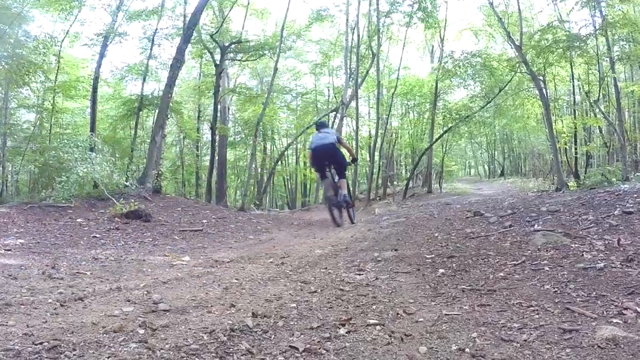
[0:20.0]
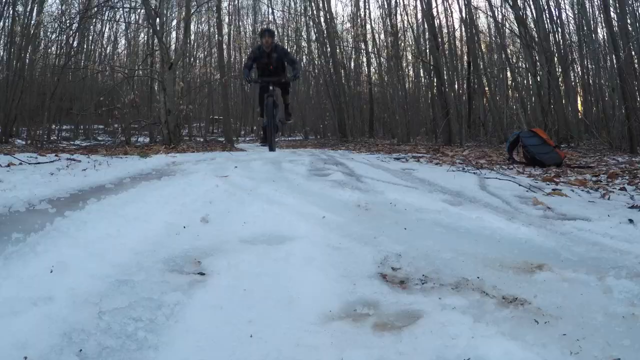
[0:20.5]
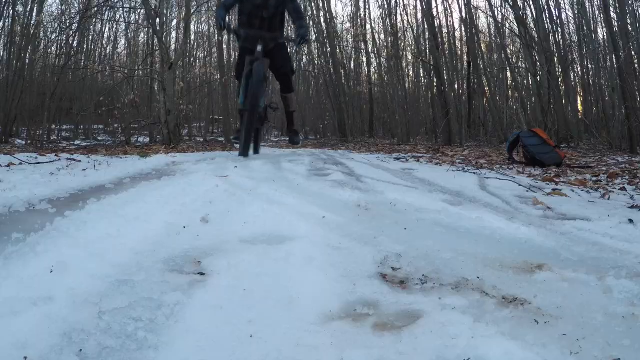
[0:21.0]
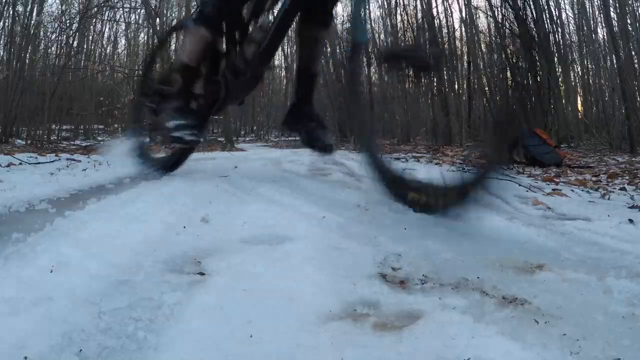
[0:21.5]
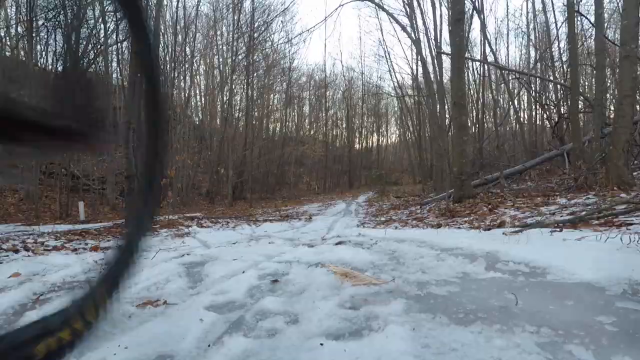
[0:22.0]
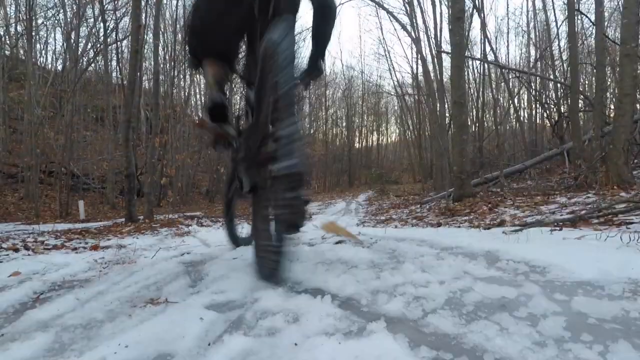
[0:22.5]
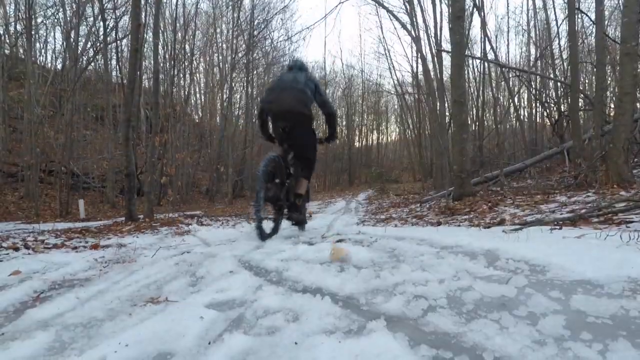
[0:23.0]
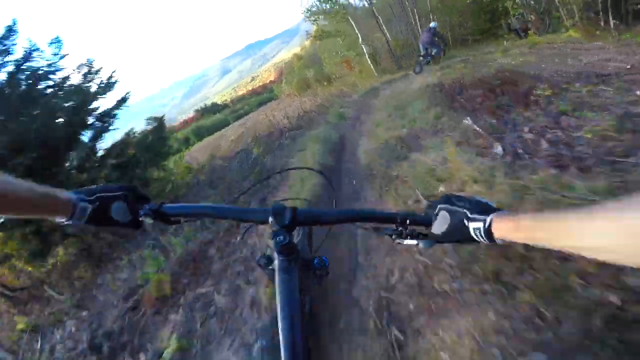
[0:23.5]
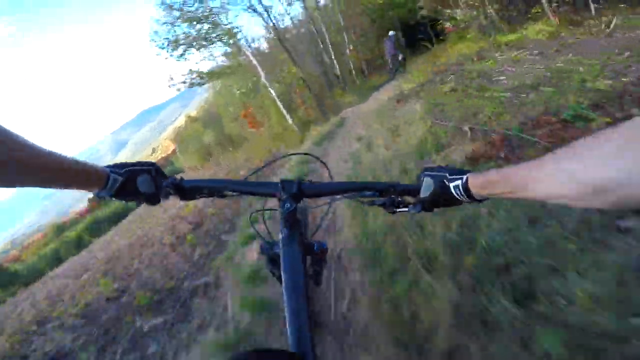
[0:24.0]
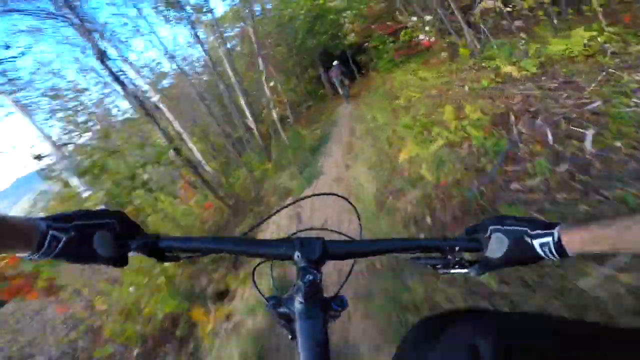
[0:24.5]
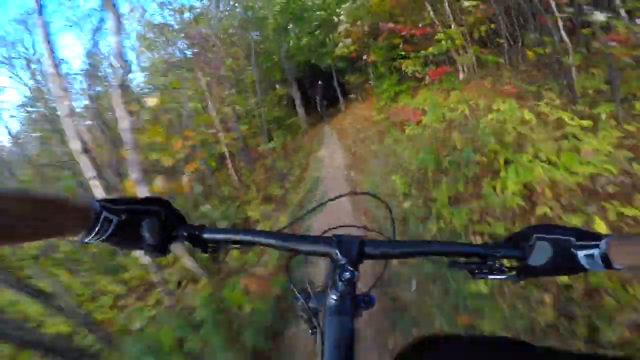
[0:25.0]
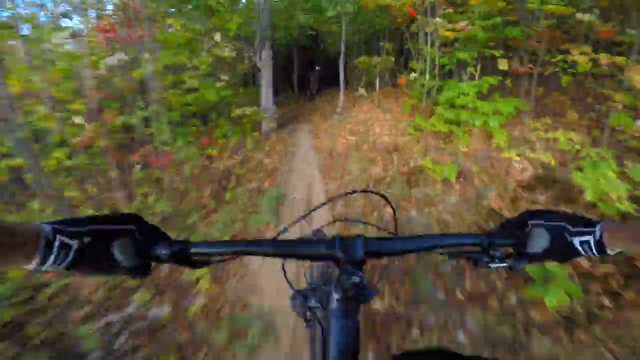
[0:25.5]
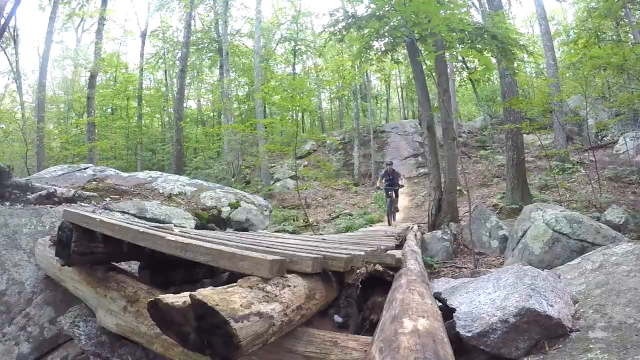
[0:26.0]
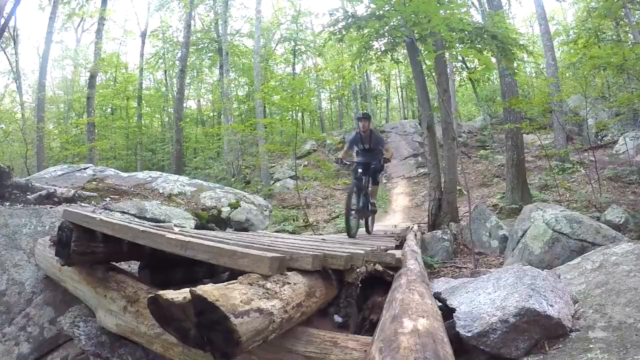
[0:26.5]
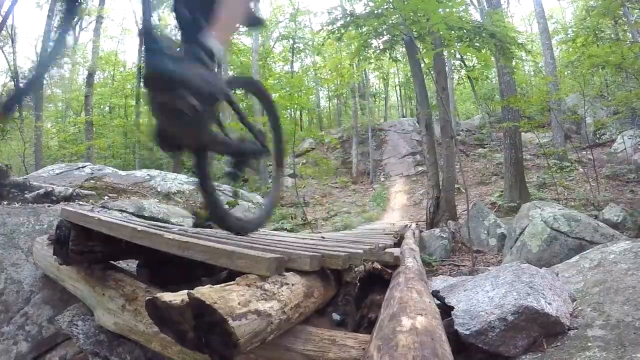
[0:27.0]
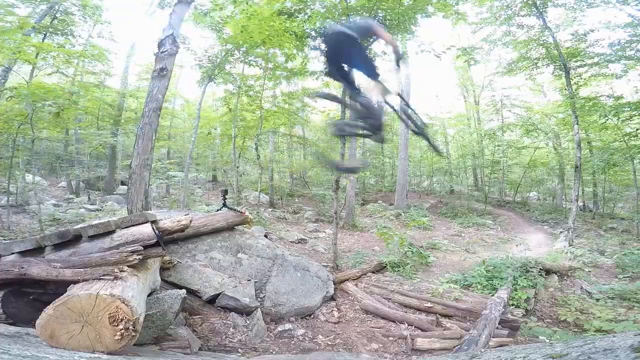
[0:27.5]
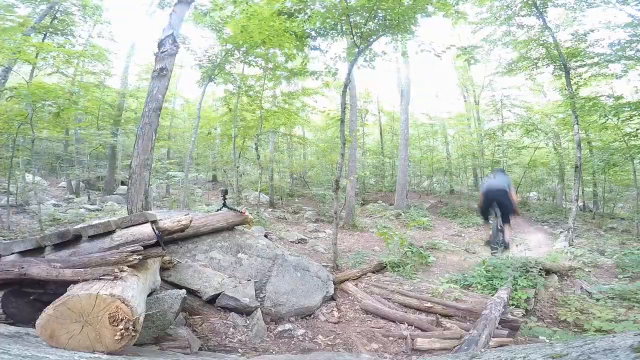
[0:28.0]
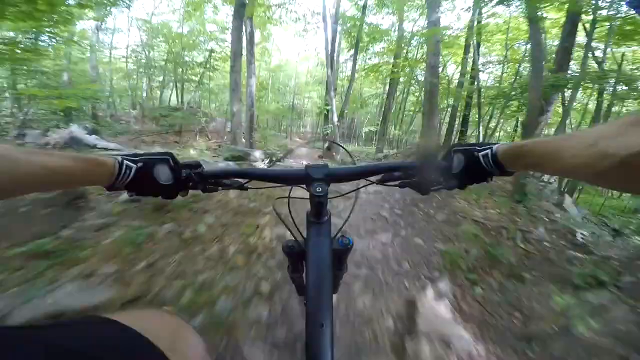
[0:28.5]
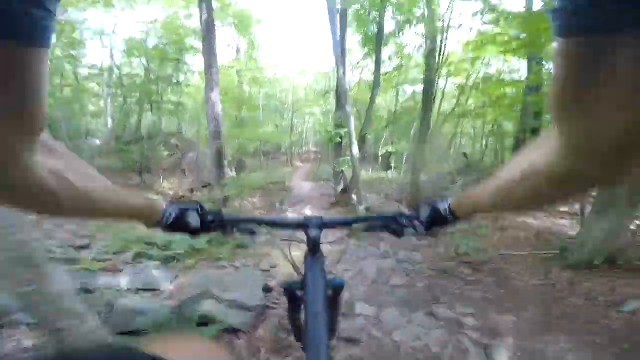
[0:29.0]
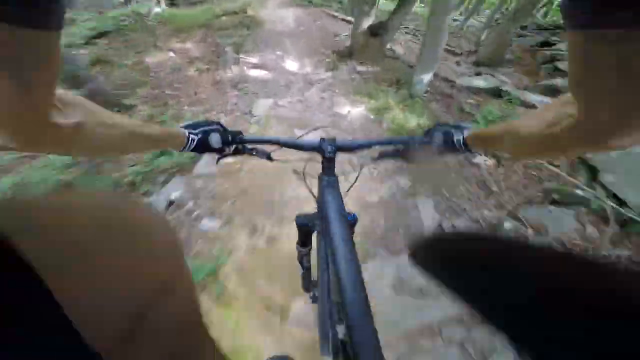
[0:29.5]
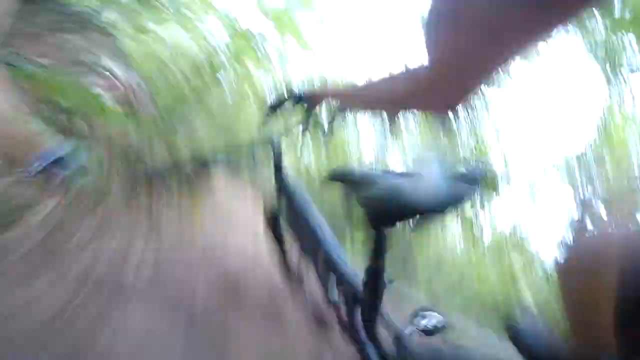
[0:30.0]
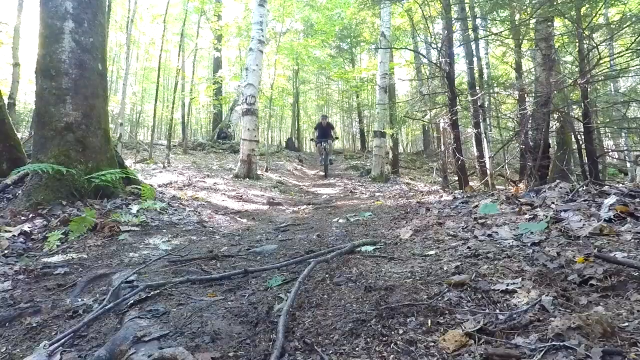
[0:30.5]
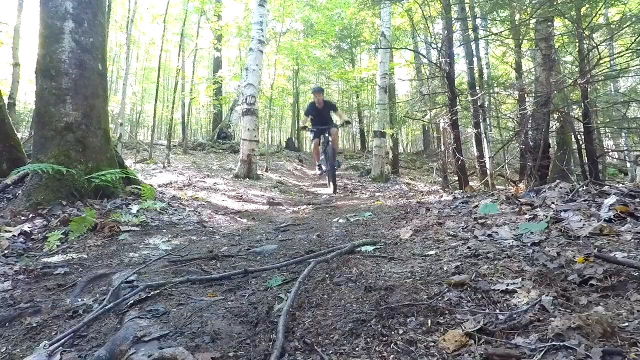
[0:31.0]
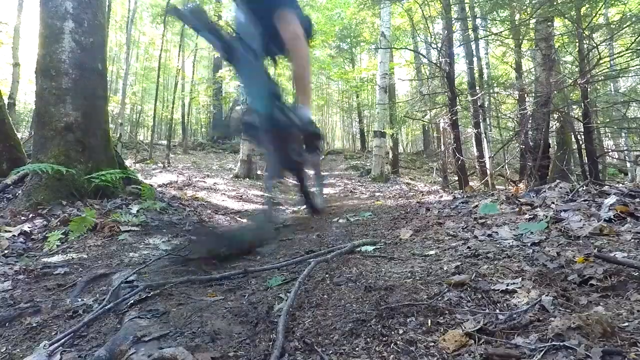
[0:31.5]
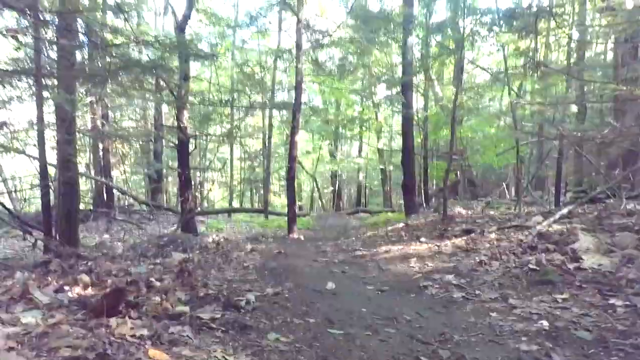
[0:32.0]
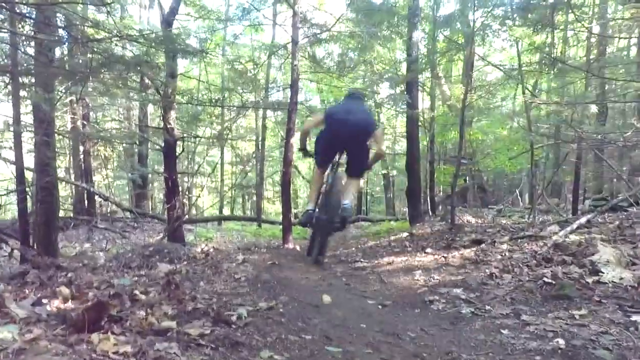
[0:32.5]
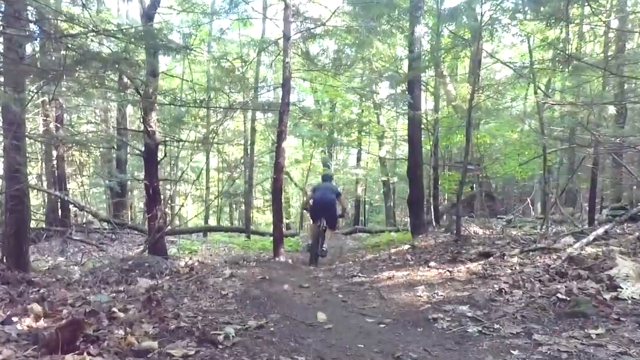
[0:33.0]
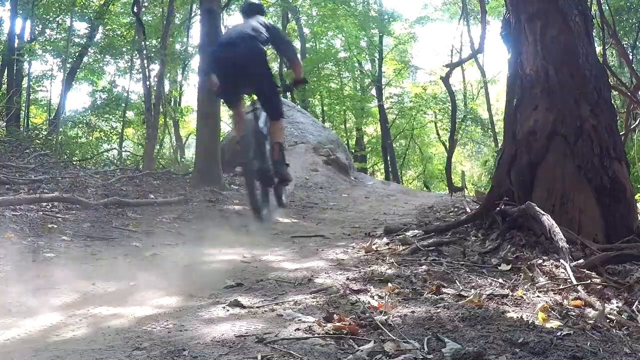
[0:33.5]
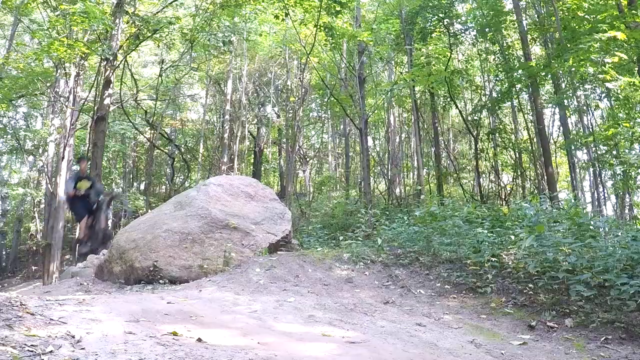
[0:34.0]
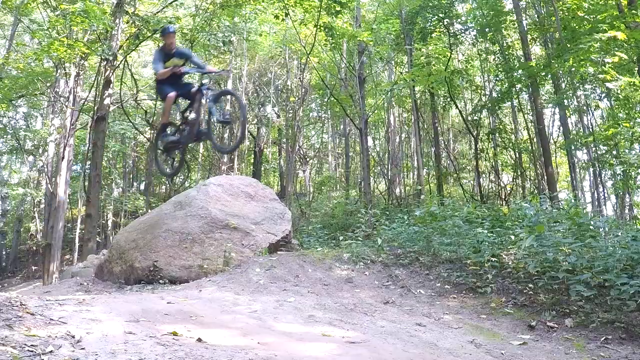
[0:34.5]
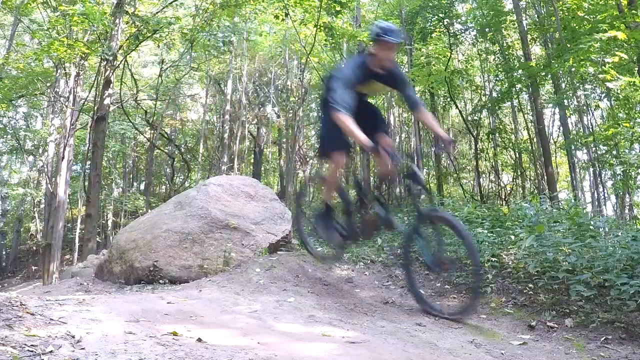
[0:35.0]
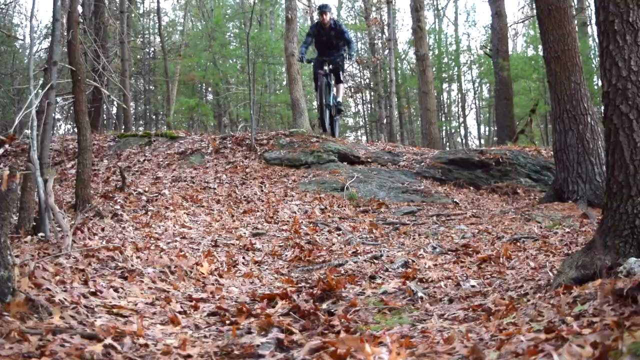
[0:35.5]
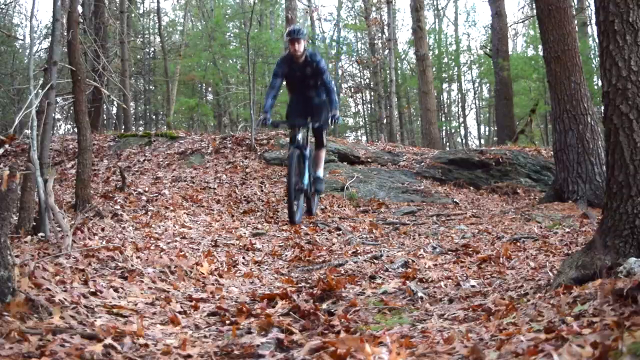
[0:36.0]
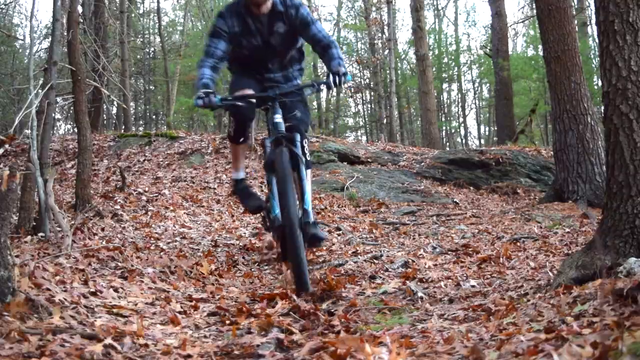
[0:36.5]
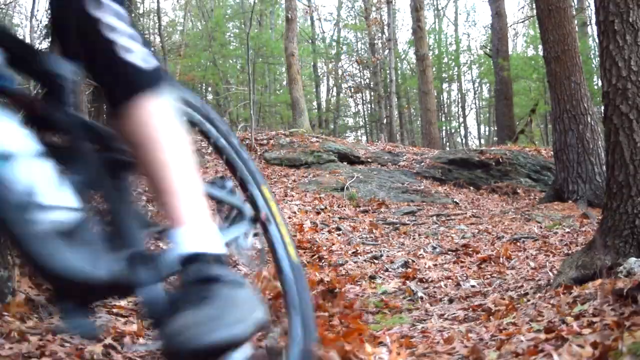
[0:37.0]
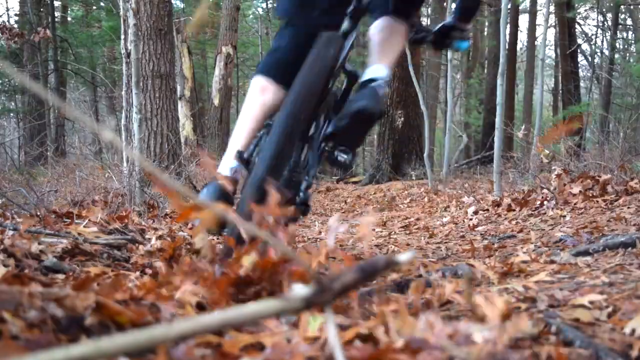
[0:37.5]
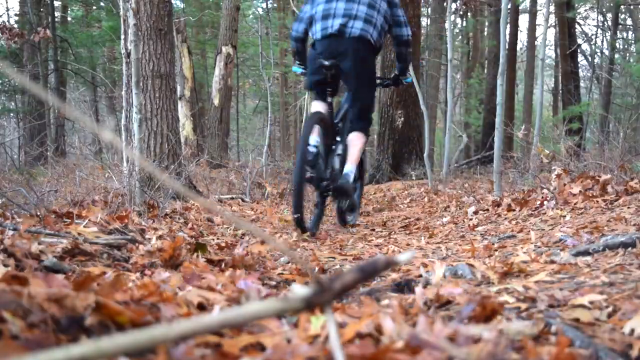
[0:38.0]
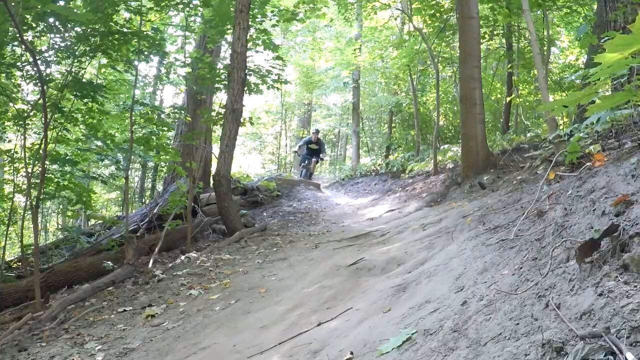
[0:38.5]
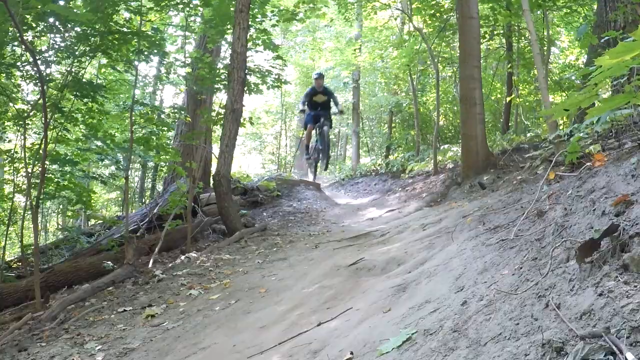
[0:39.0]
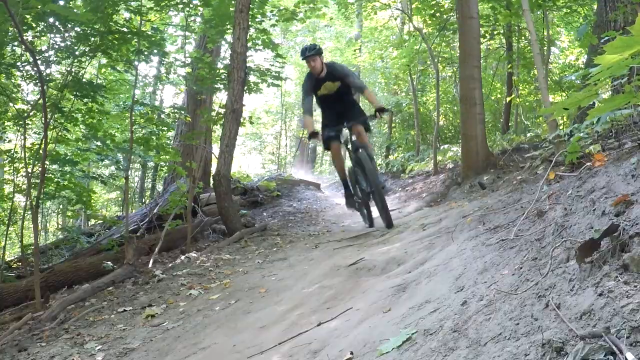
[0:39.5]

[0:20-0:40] A rapid series of clips, each less than a second long, shows a man riding a bicycle in a heavily wooded forest area, forming a sort of highlight reel of his aerial feats. He wears protective gear and a helmet. He skids to a stop on some snow, then a first-person view shows him riding through the forest, riding off a ramp and jumping over a ravine. He falls over on his bike, gets back up and continues riding, then jumps over a rock. He rides over leaves in a forest clearing, then uses a log to jump briefly into the air, lands on his tires and keeps riding without any issues.